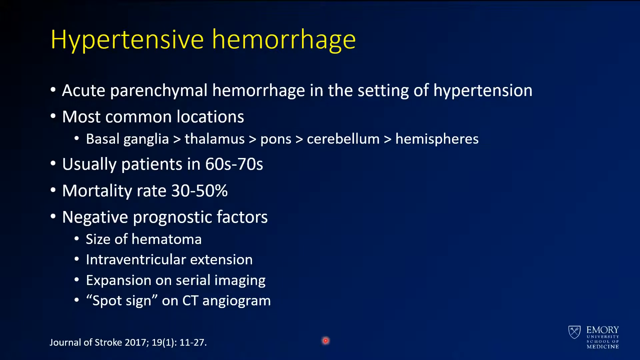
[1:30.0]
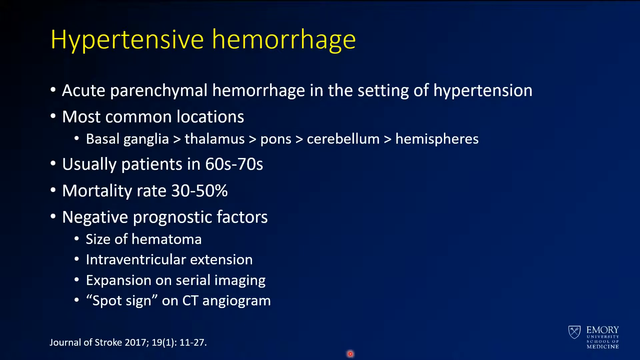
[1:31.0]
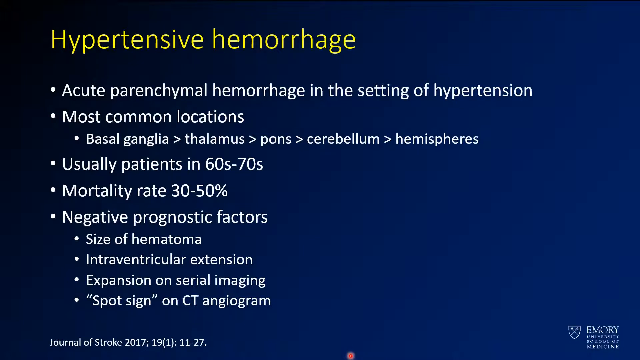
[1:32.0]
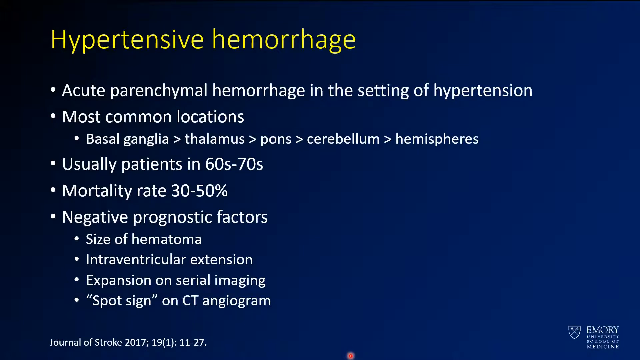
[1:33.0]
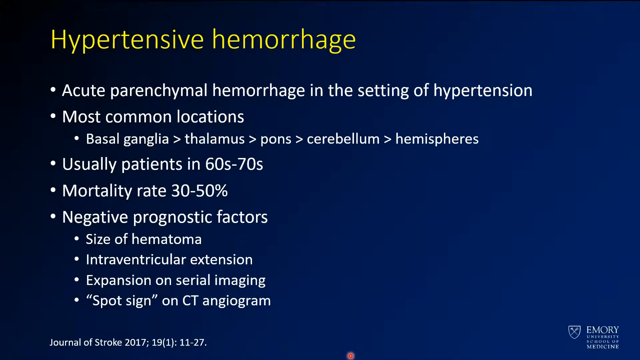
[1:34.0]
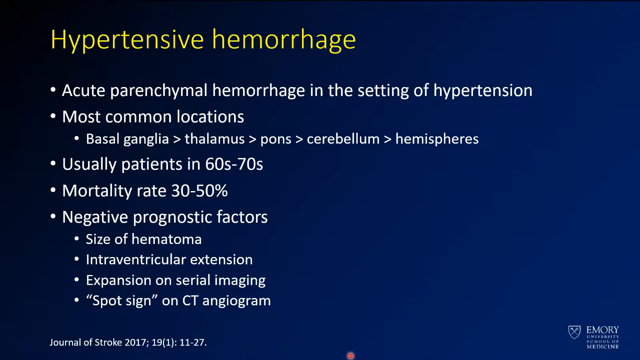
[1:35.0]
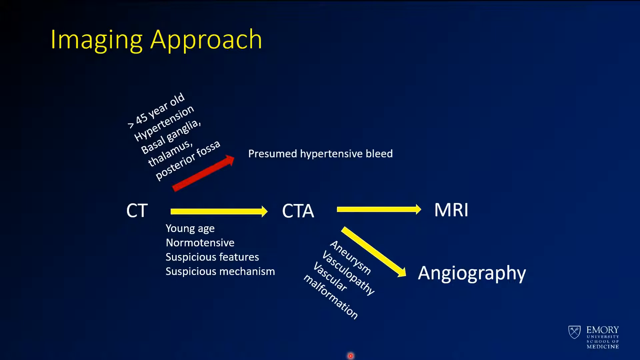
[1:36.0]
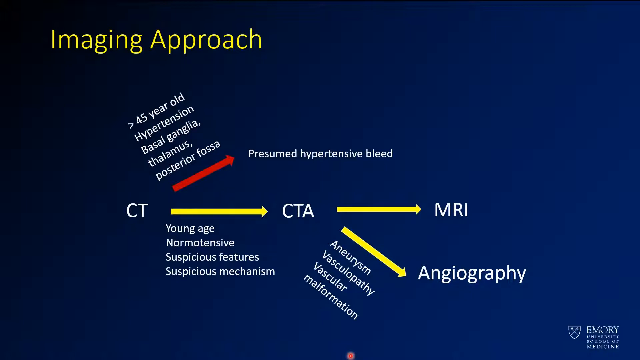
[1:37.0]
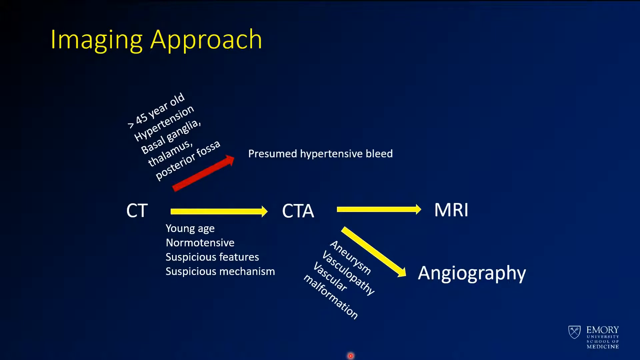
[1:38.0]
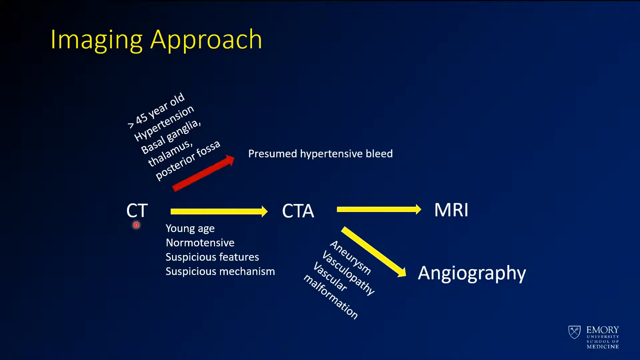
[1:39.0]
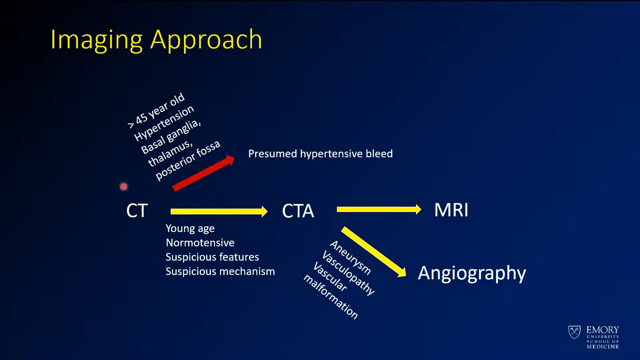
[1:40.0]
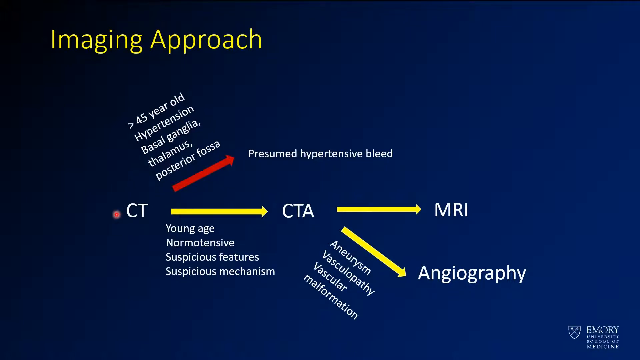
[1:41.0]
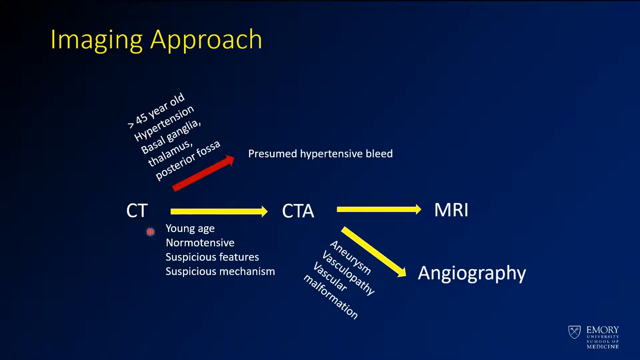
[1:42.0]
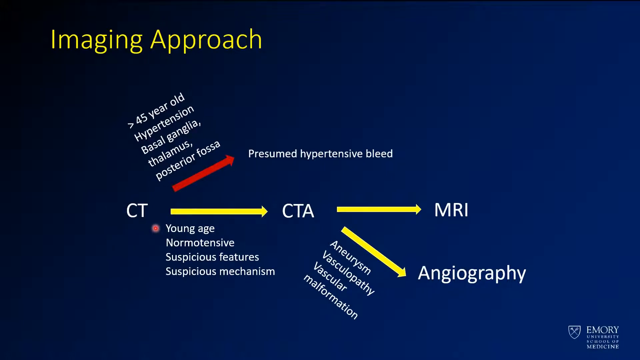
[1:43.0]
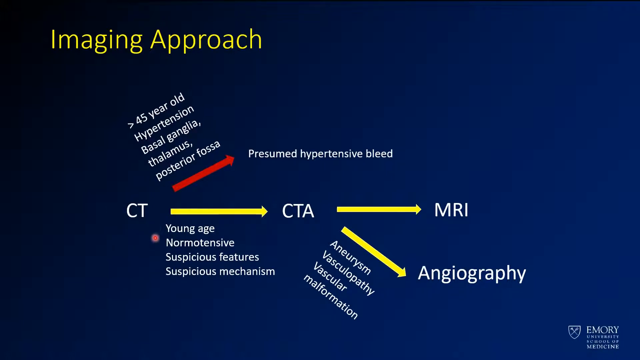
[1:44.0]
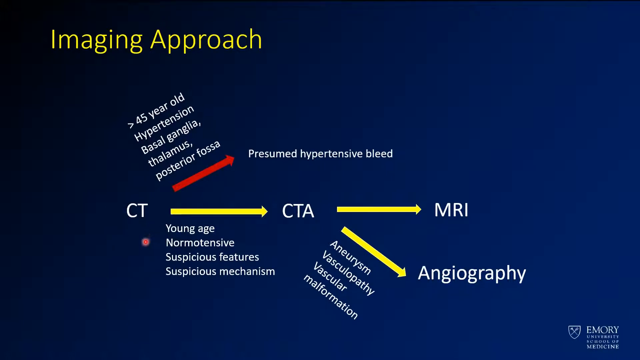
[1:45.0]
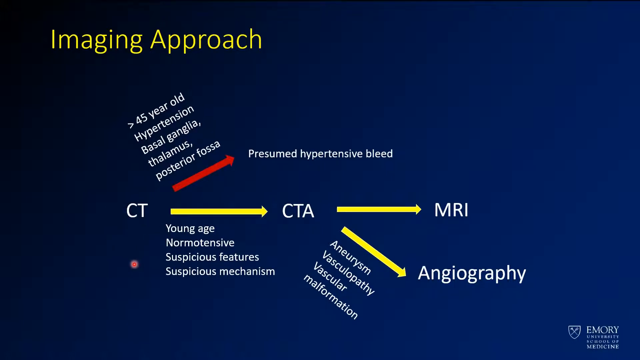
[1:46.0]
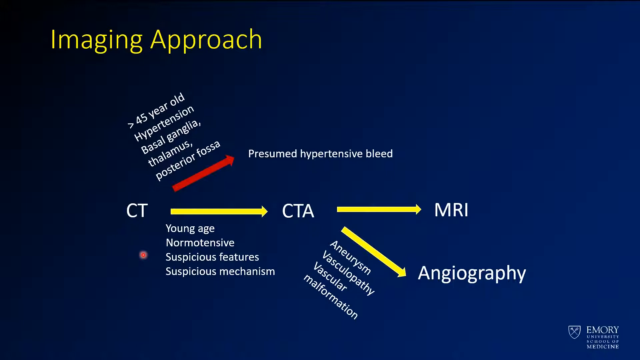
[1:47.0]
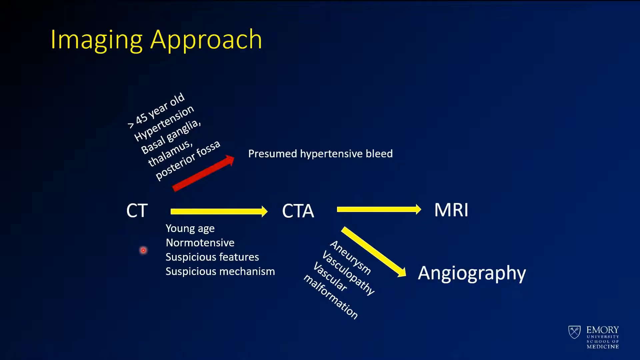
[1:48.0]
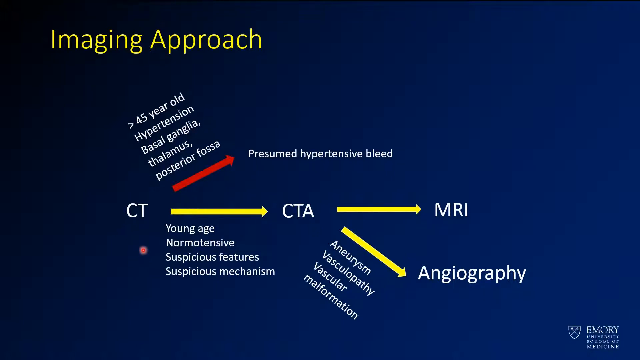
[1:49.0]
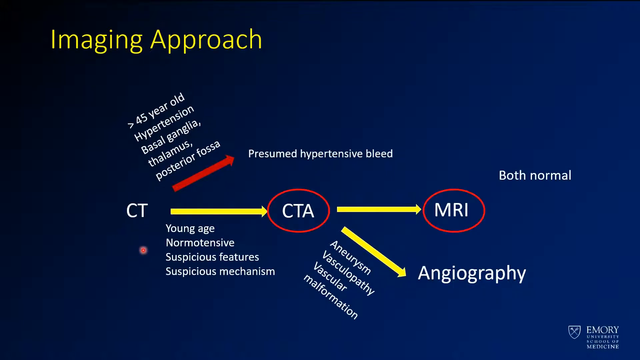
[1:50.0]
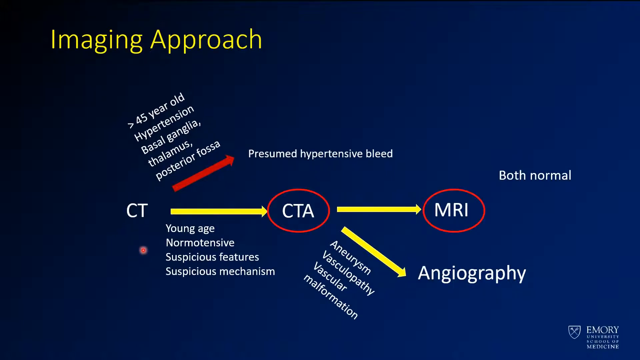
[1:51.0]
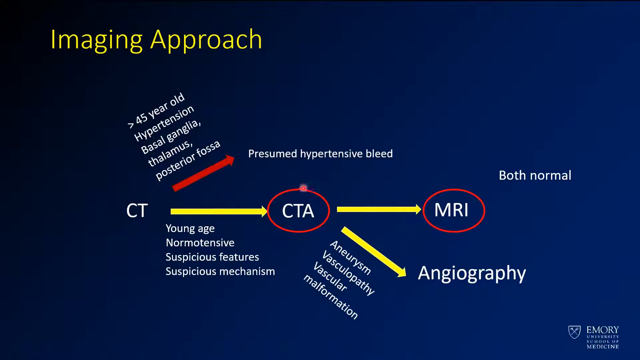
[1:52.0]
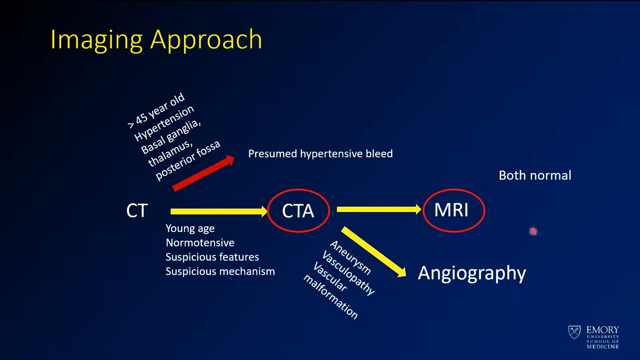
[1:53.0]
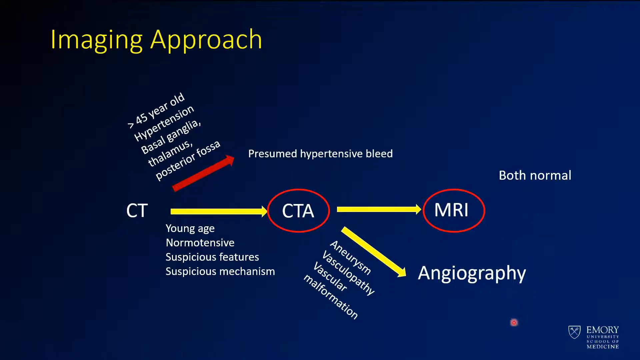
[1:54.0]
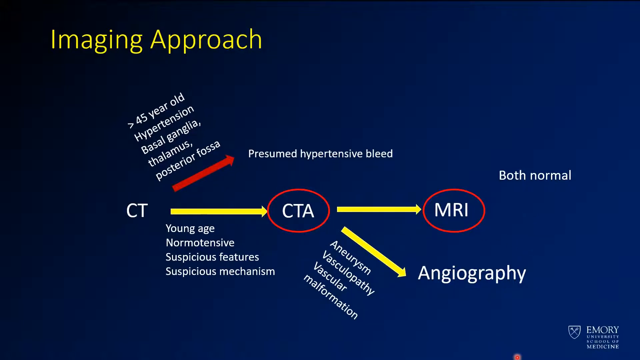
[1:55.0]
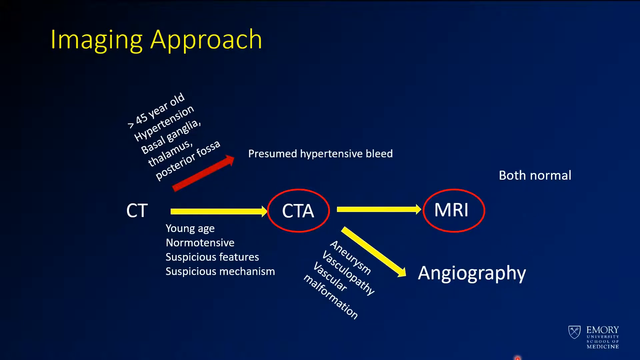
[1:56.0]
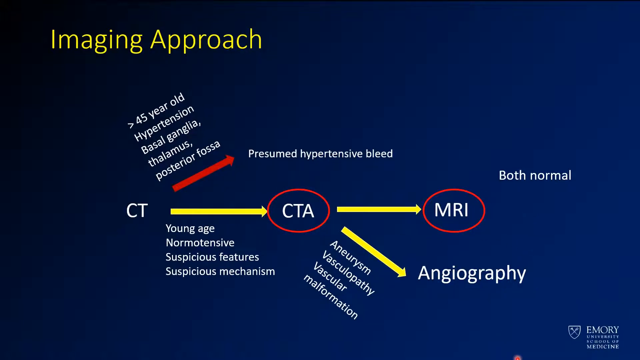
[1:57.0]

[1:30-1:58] The same hypertensive hemorrhage slide is shown first, and then a second slide appears. It has a black background, with greenish block letters in the upper left-hand corner reading "imaging approach". A chart shows CT with a yellow arrow to CTA, CTA with a yellow arrow to MRI, and CTA with a yellow arrow to angiography. CTA and MRI have red circles around them; CT and angiography do not. A red arrow comes out of CT with text including "45 year old hypertension, basal ganglia, thalamus", followed by a red arrow with "presumed hypertensive bleed". Underneath the CT-to-CTA arrow is "young age, normotensive, suspicious features, suspicious mechanism". Between CTA and angiography are words including "aneurysms" and "vascular malformation", and then an arrow to MRI with the words "both normal" at the end.